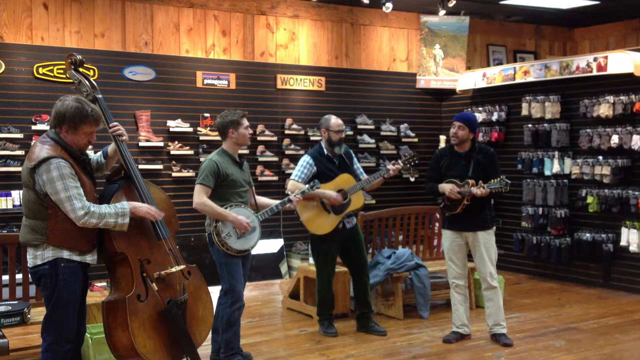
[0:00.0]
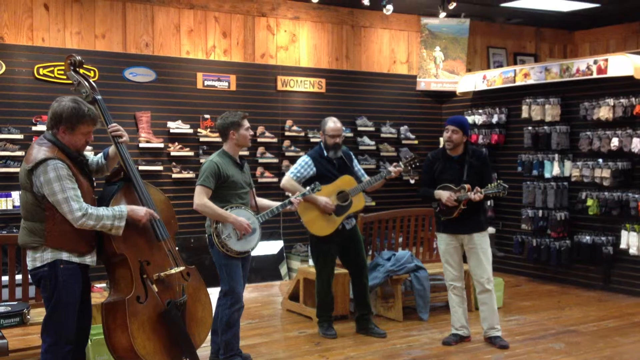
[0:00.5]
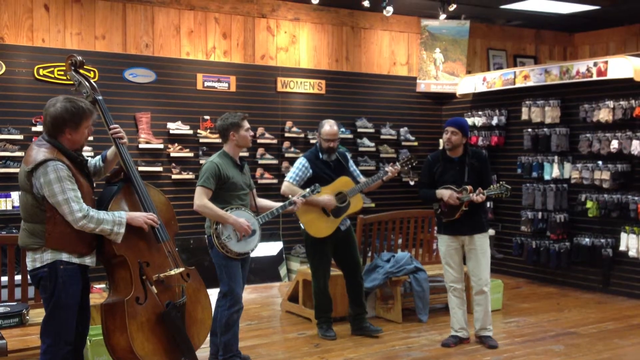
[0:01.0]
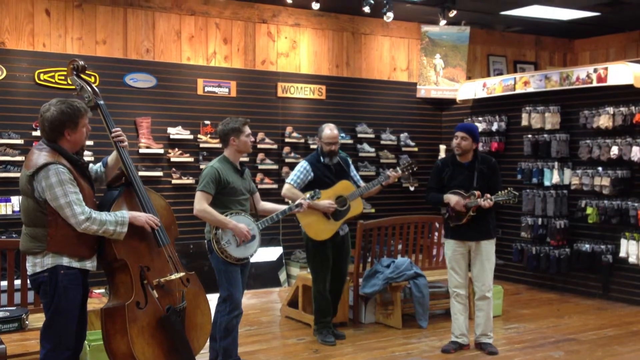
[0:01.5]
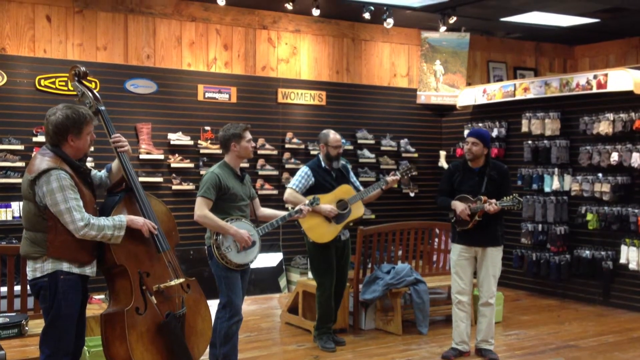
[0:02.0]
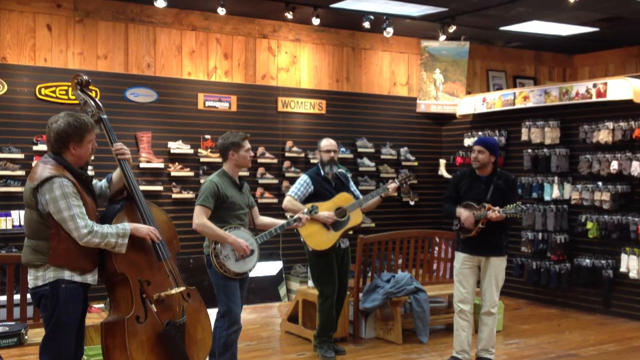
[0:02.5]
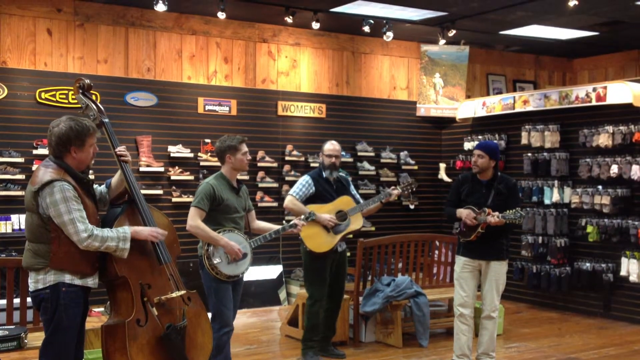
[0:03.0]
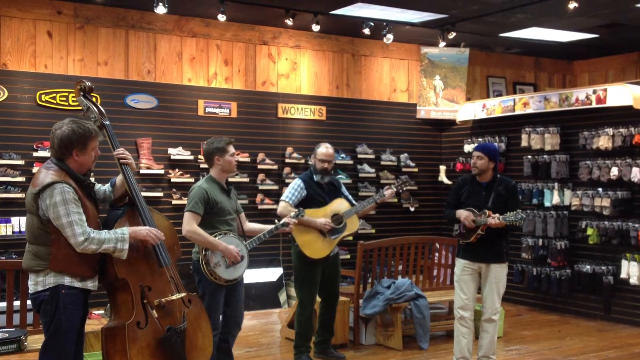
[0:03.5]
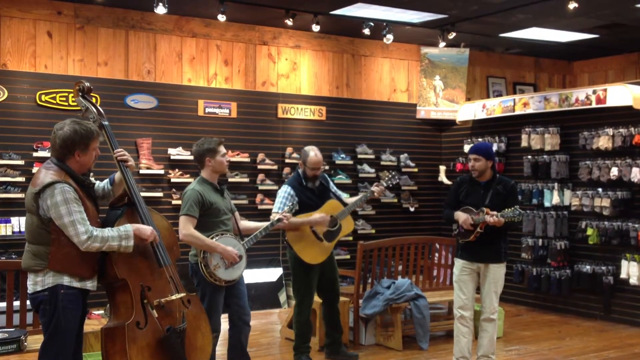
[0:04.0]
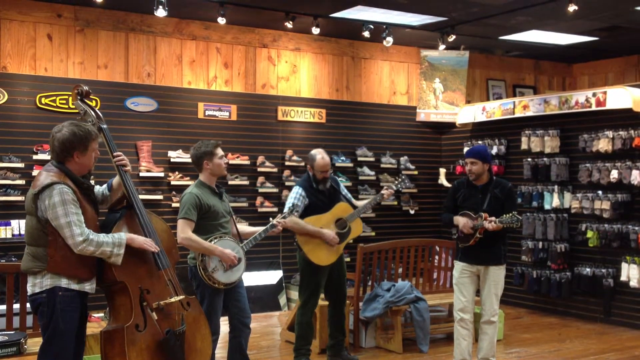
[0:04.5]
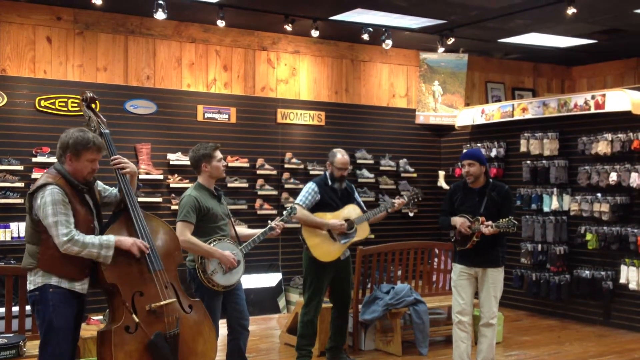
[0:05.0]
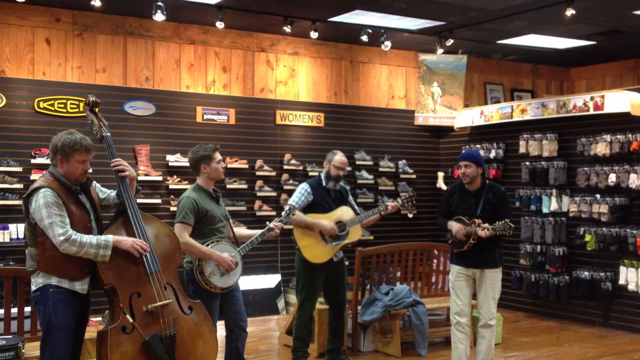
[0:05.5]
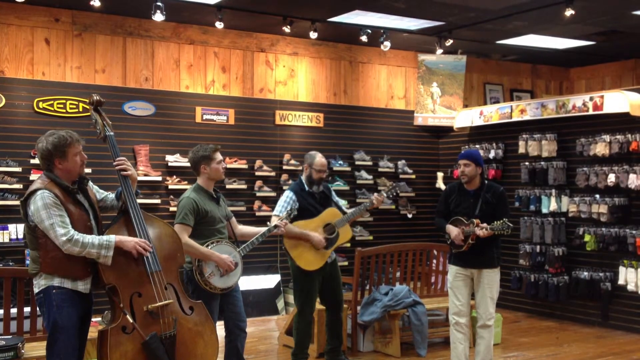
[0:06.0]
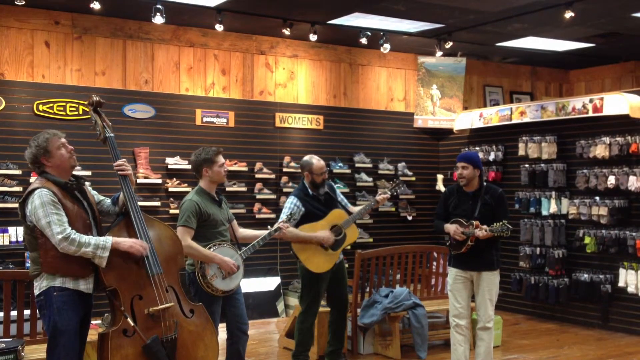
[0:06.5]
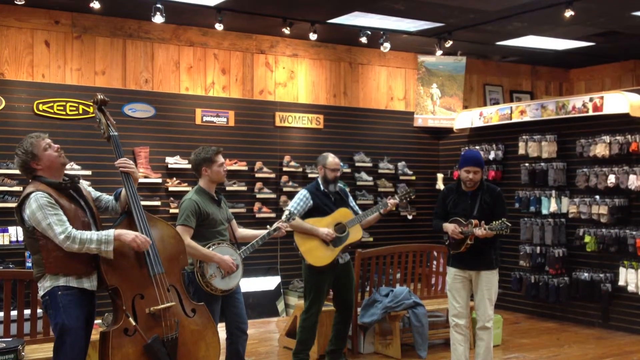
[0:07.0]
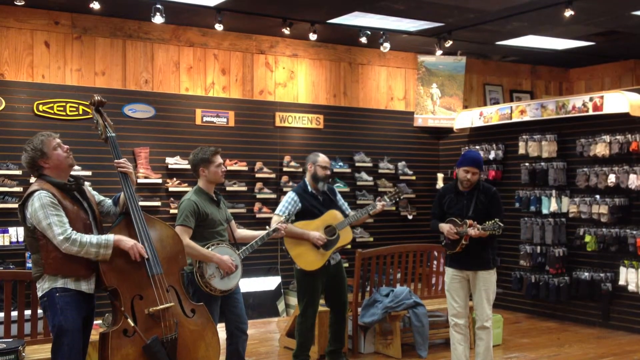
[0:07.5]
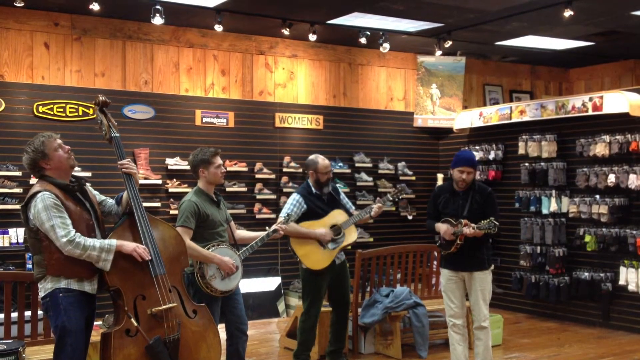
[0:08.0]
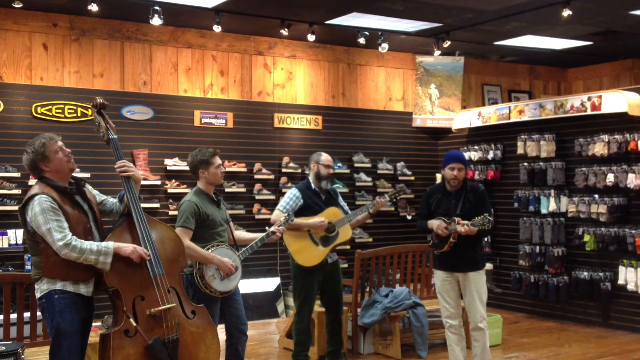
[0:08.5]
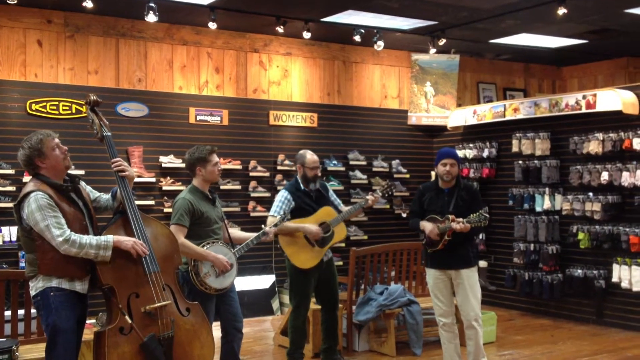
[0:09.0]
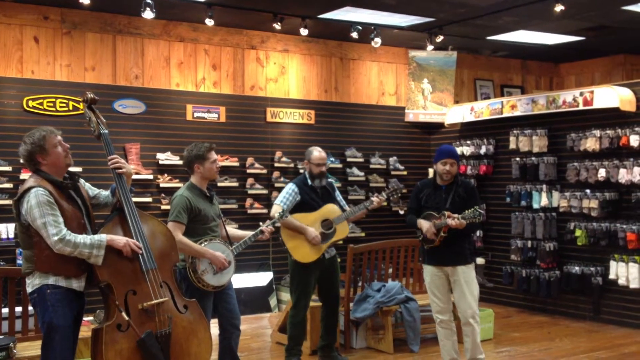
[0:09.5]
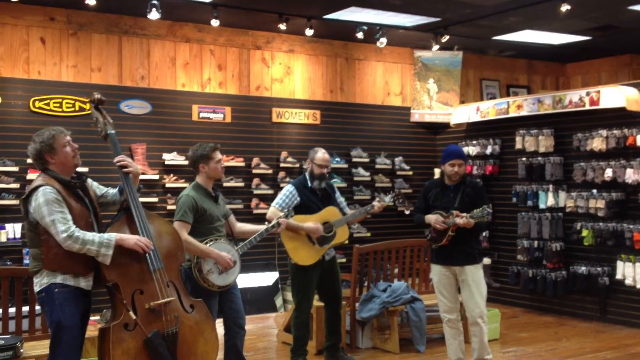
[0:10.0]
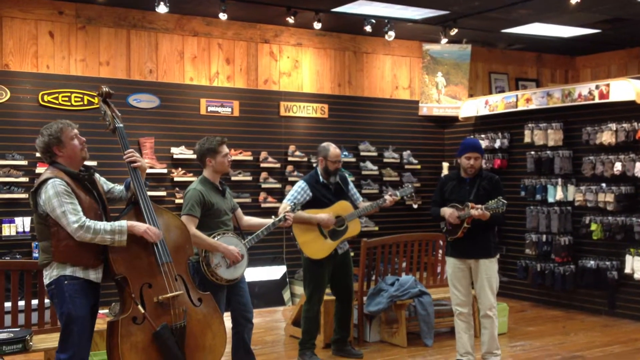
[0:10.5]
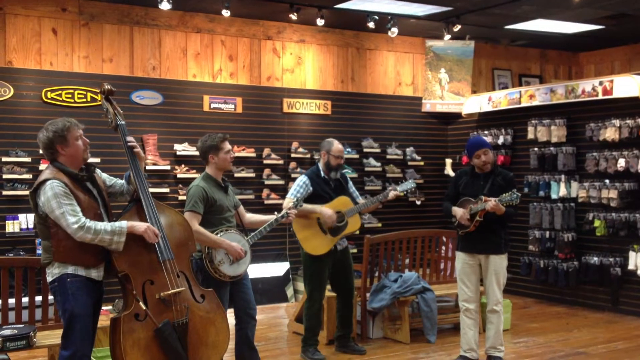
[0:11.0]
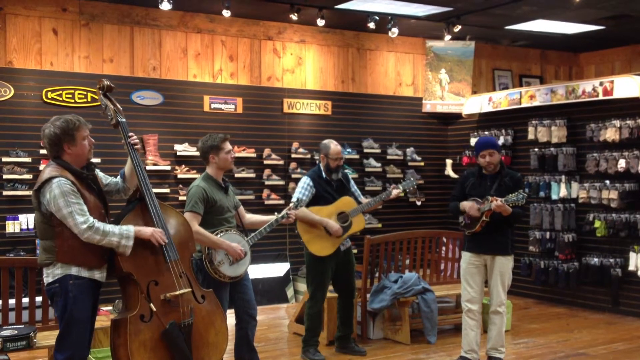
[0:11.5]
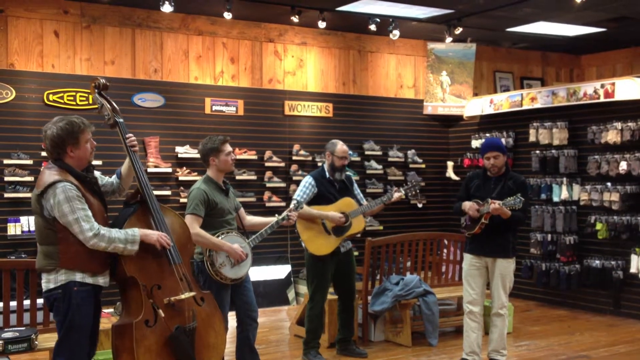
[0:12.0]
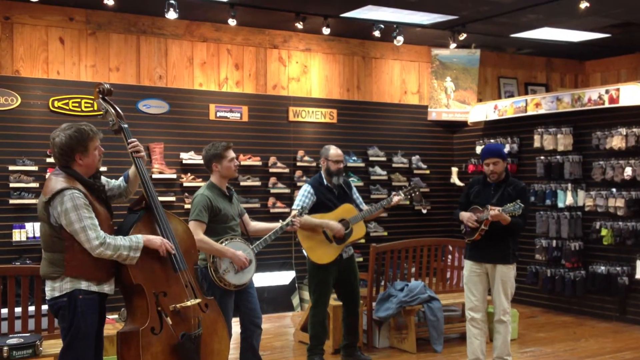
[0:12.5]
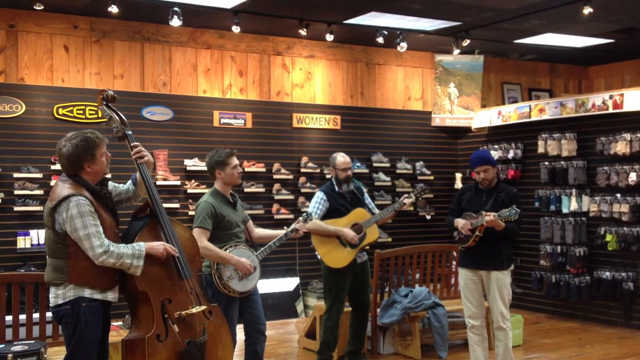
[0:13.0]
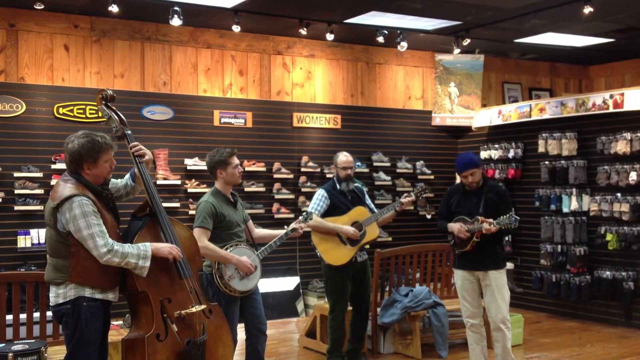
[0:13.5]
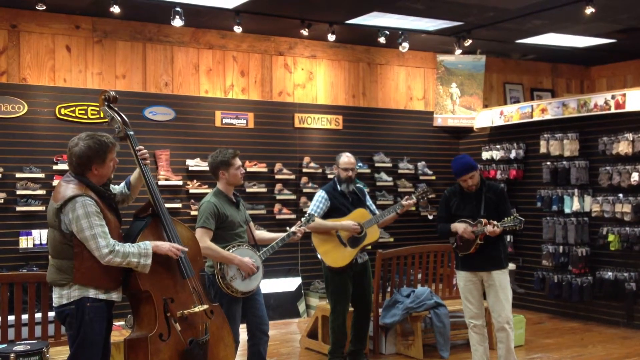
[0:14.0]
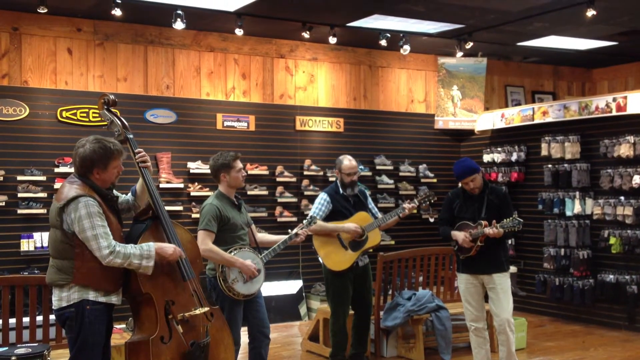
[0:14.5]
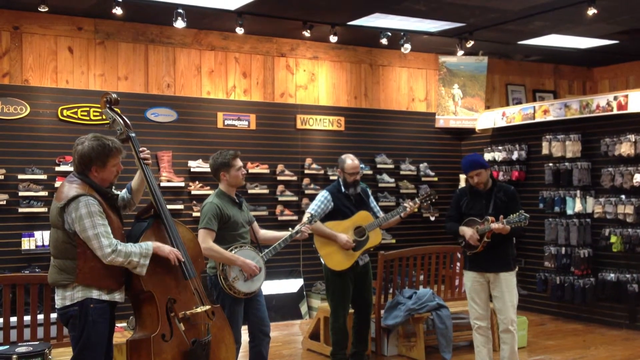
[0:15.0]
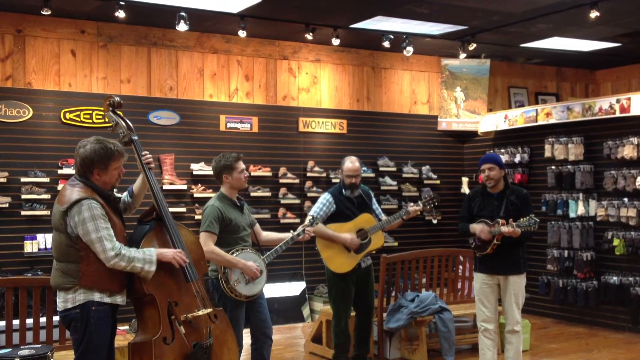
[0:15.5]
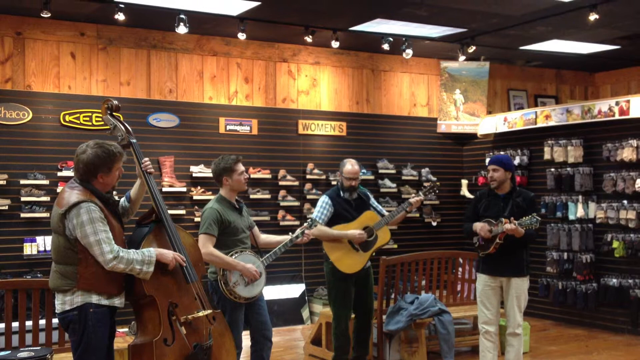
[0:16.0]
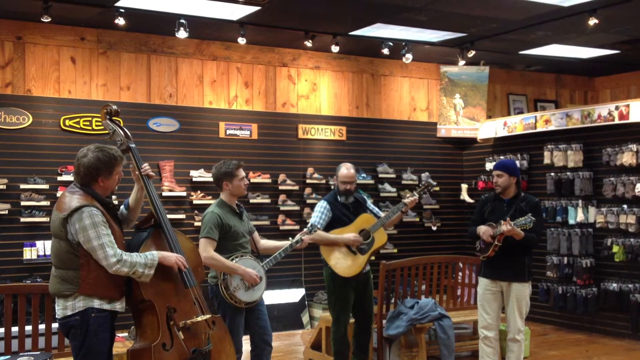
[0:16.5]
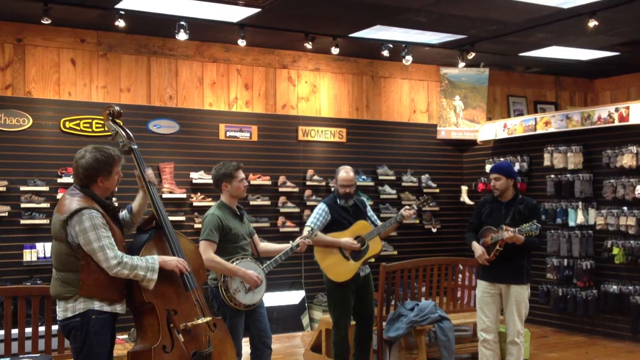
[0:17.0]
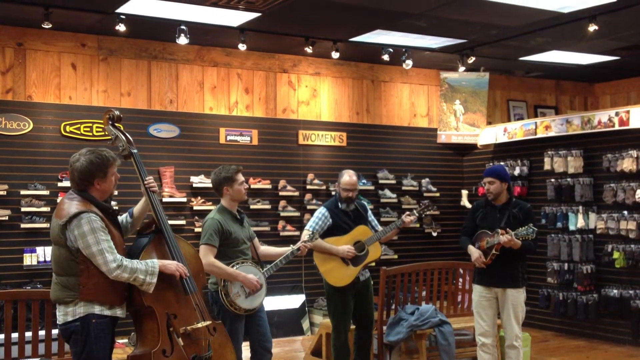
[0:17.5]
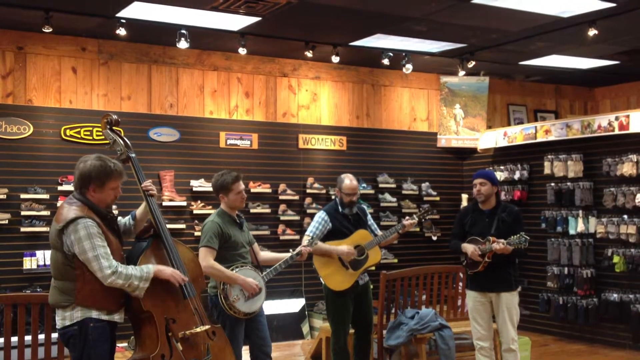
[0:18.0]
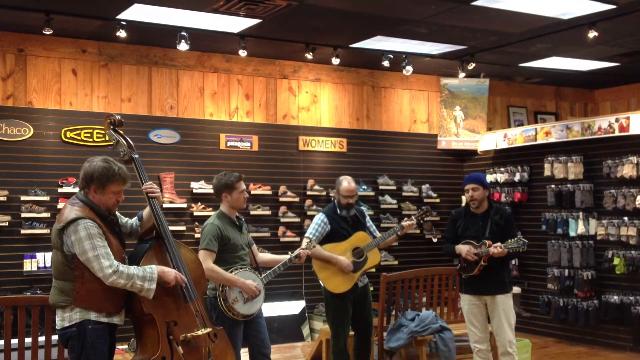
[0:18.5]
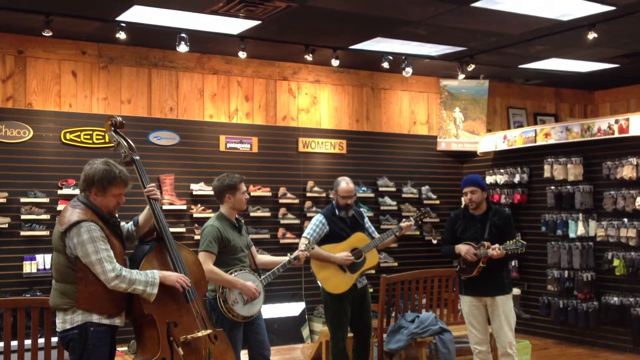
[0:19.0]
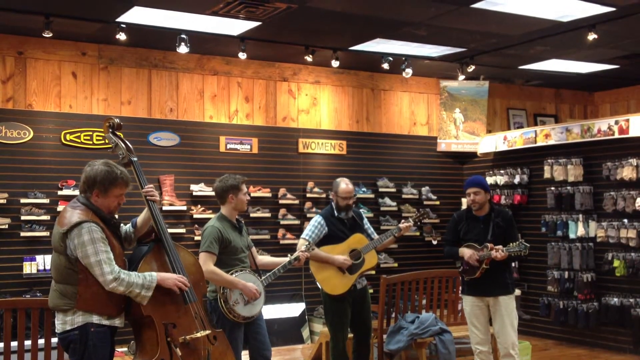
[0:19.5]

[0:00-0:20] Four men appear to be in a shoe store, with shoes in the background. Each has a musical instrument: one has a cello, one a banjo, one an acoustic guitar, and one a small string instrument that might be a mandolin. It looks like a music lesson, but they are definitely having a jam session. One man seems to be singing. They are four older, middle-aged men, and one is a little younger than the other three. They wear jeans and casual clothes; one wears a beanie, and one is almost bald and has a beard. They are jamming and having a good time.